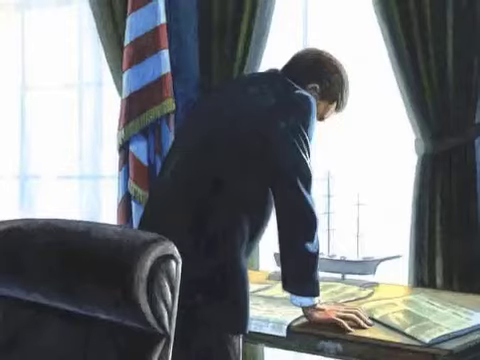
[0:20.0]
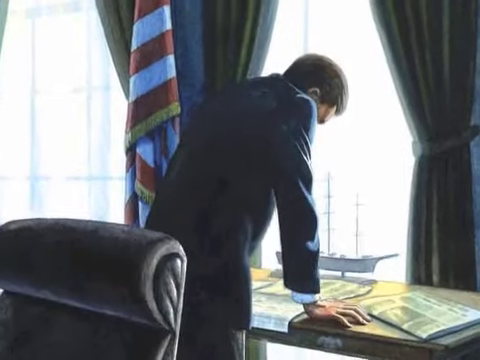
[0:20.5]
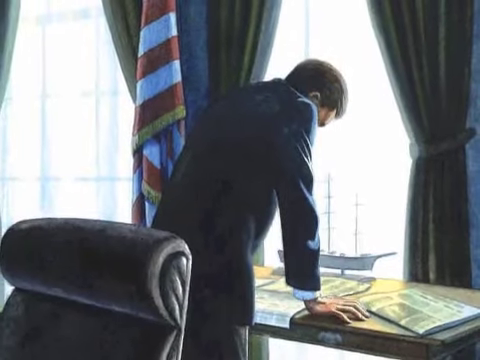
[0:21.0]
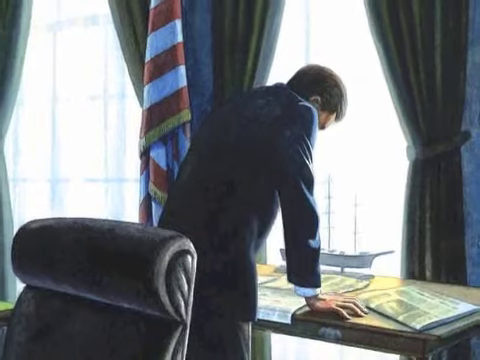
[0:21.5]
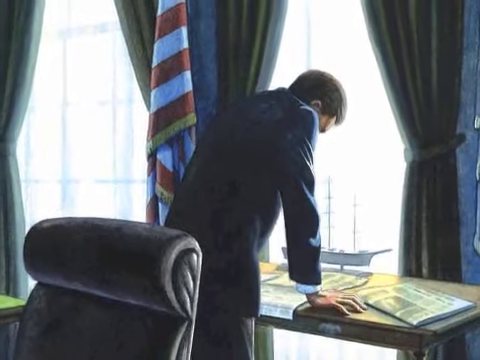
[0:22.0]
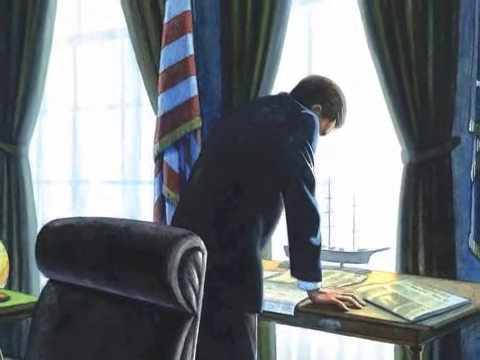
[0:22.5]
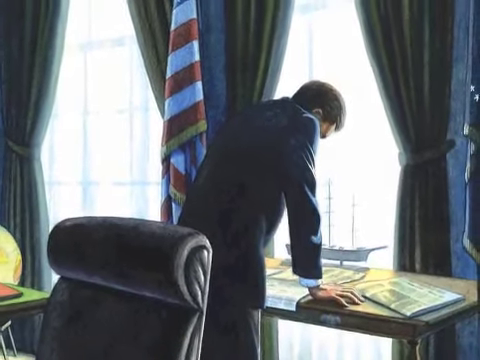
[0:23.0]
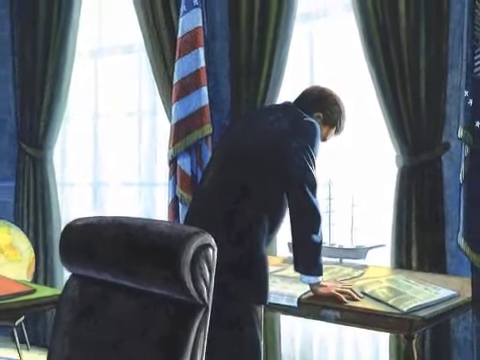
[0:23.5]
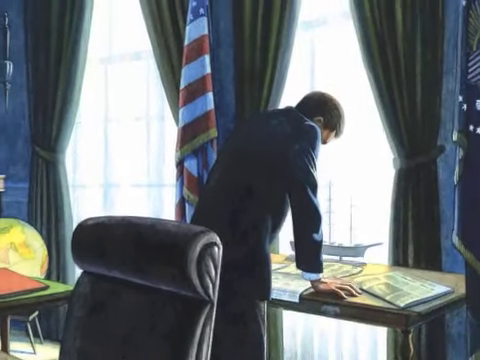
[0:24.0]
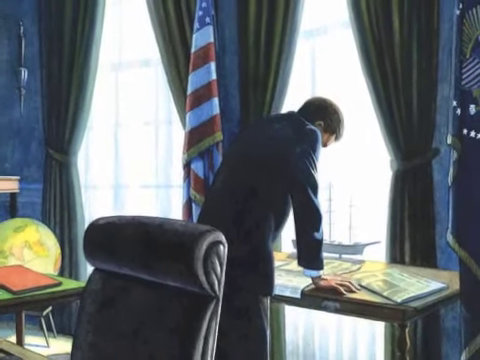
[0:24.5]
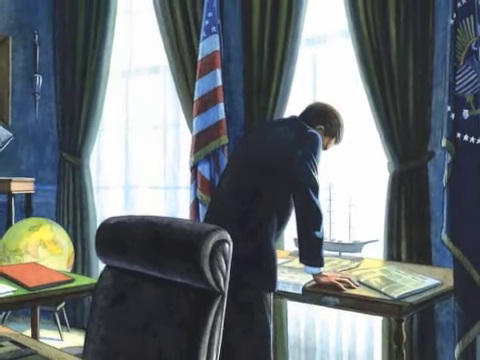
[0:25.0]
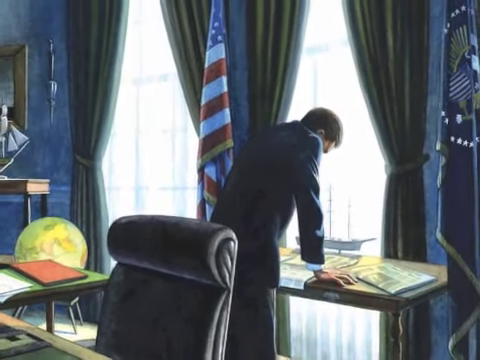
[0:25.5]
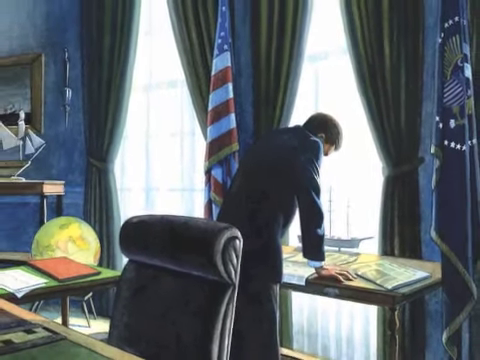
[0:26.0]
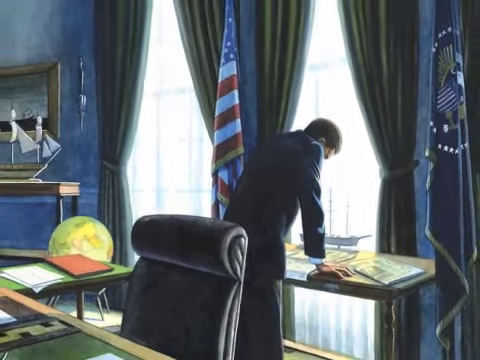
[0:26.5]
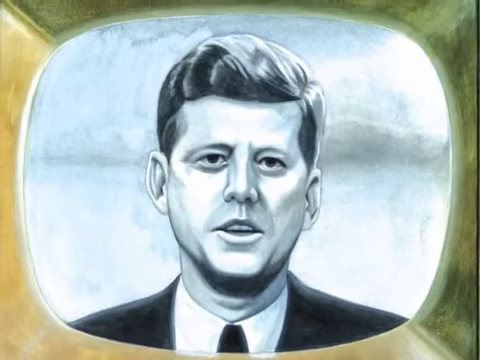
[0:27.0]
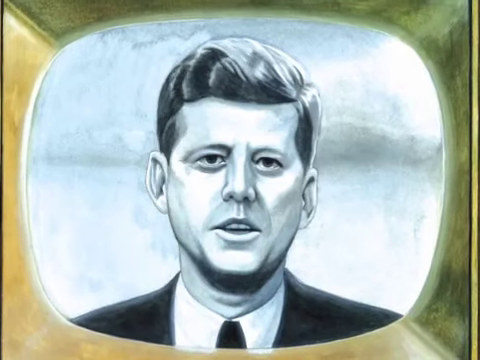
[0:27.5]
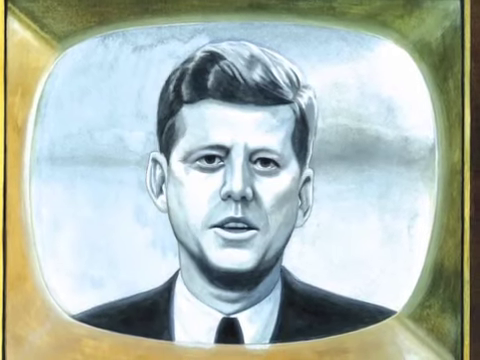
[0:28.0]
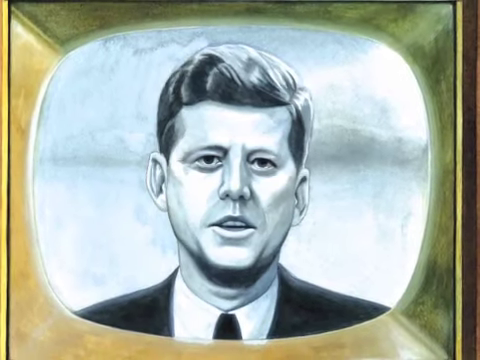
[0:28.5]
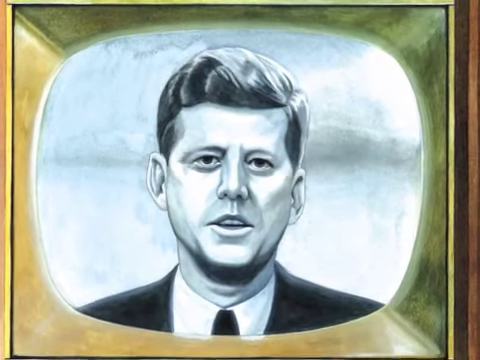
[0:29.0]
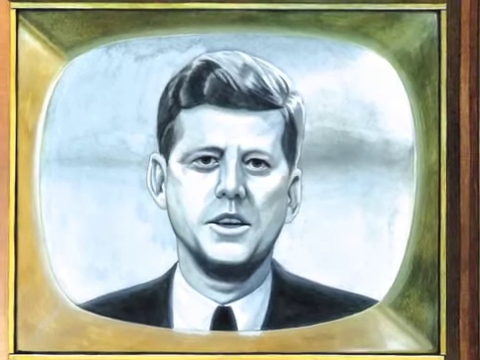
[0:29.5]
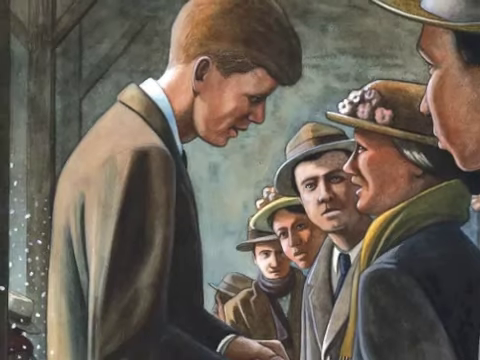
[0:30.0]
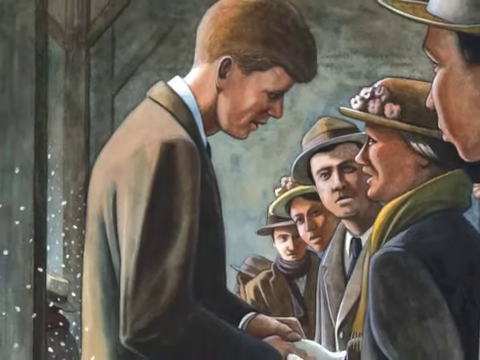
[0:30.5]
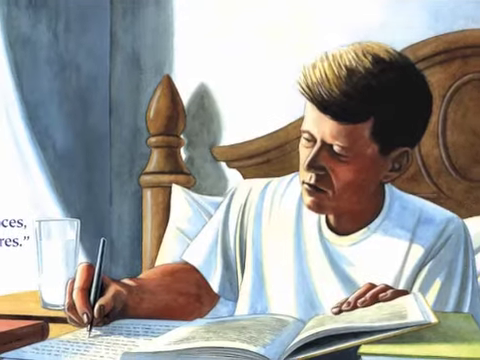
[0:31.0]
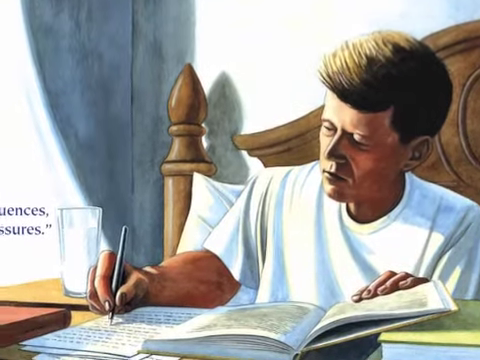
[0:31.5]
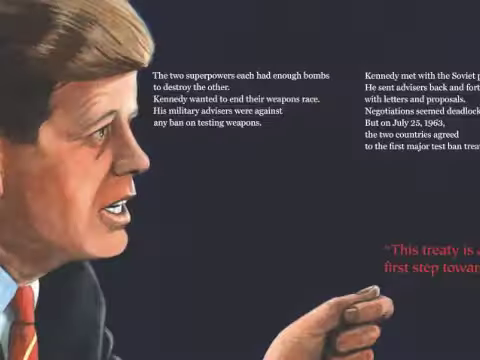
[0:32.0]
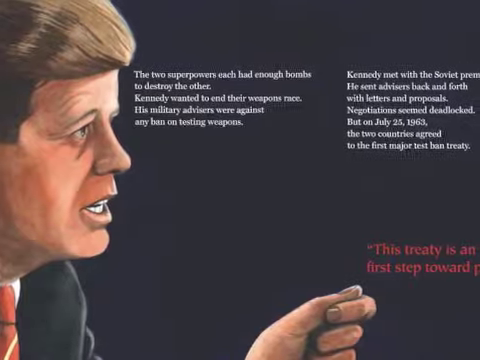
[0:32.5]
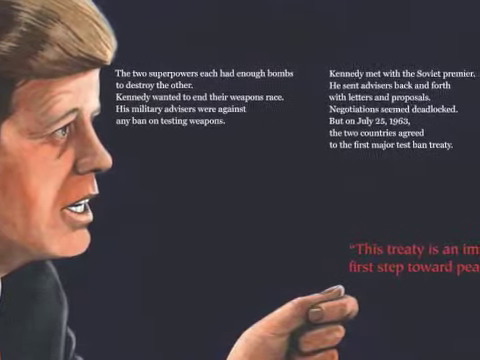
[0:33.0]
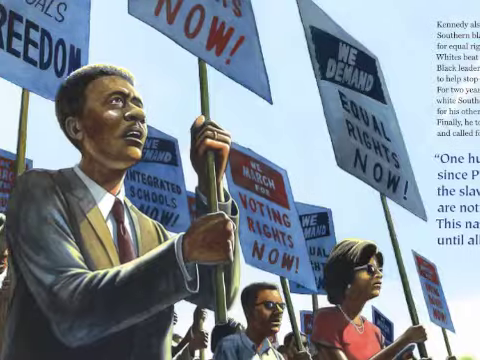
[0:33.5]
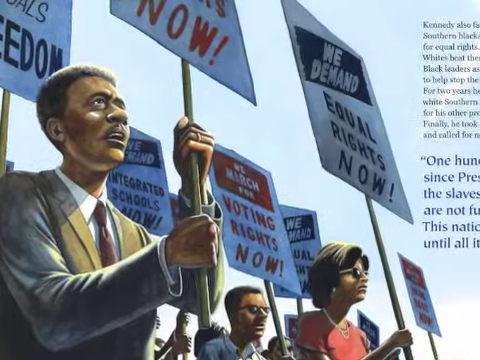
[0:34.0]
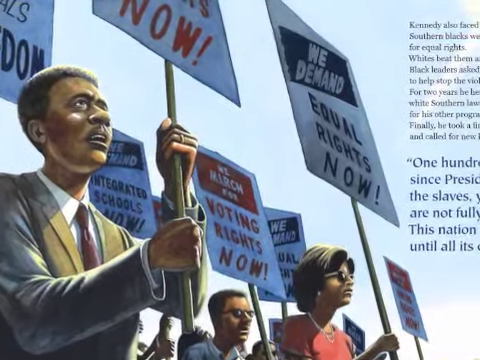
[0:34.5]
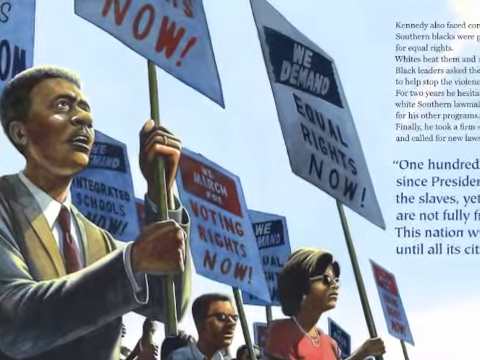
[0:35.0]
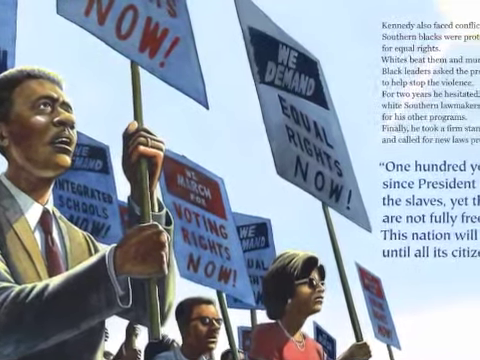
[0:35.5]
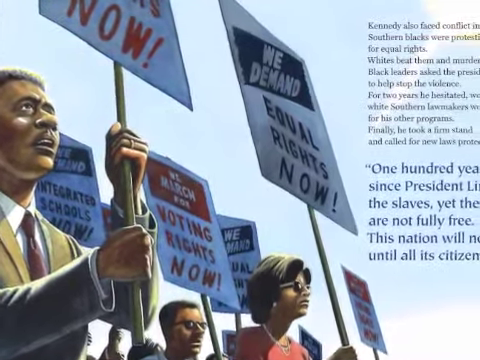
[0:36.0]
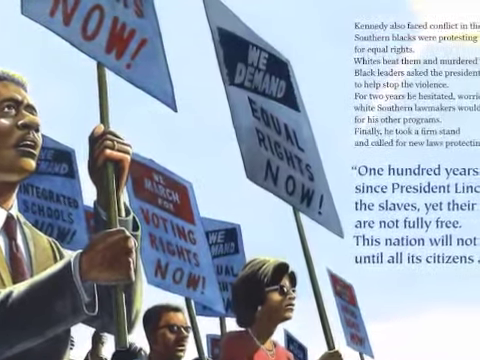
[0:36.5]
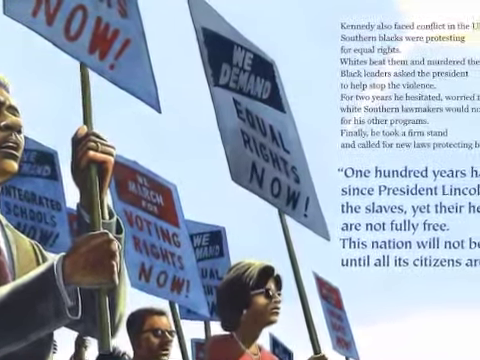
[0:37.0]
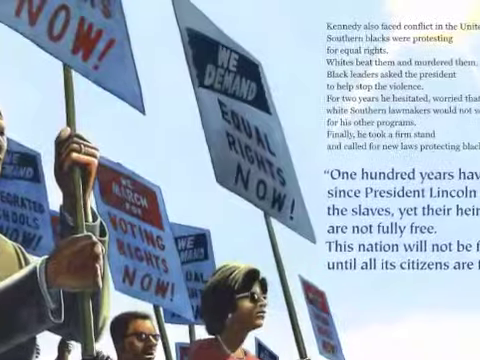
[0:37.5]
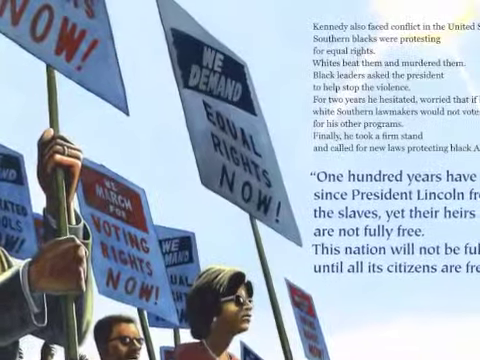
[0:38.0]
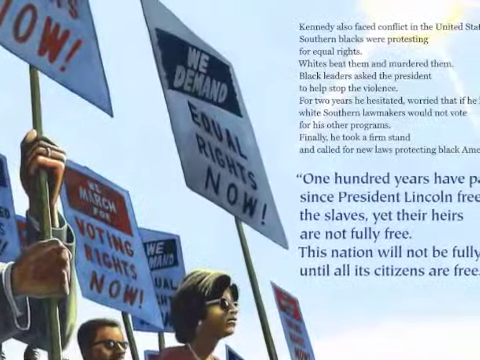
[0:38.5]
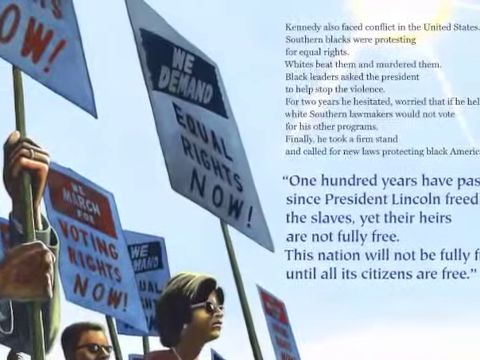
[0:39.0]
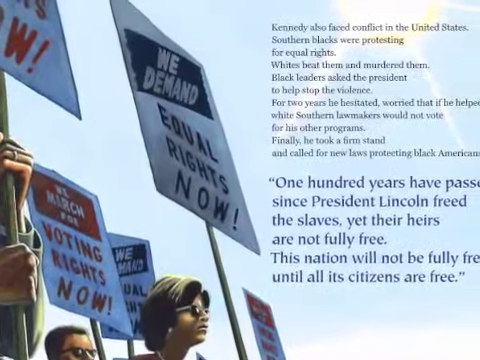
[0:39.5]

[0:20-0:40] The same man leans over his desk with an American flag behind him; the general vibe of the image is that he is stressed. A small model of a ship and a newspaper are on his desk. His chair is black, and a globe is behind him as the camera zooms out, along with a red folder or binder. Next, an illustration of him appears on a TV in black and white. He meets with civilians and talks to an older woman wearing a hat with several flowers on it. He then sits in his bed writing something while wearing a white T-shirt. Text follows: "the two superpowers each had enough bombs to destroy the other. Kennedy wanted to end their weapons race. His military advisors were against any ban on testing weapons. He sent advisors back and forth with letters and proposals. Negotiation deadlocked on July 25th 1963. The two countries agreed to the first major test ban."